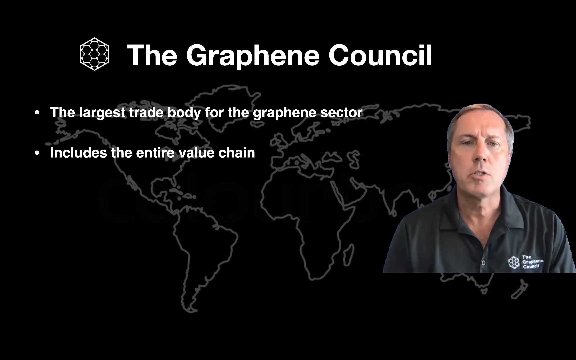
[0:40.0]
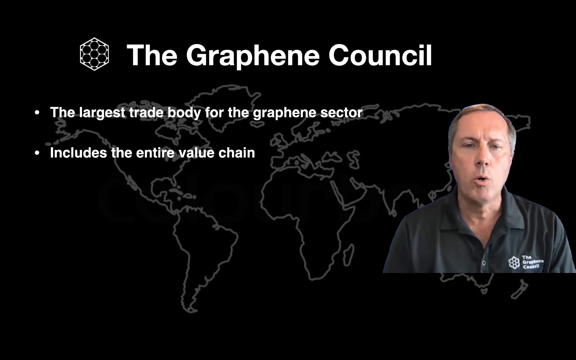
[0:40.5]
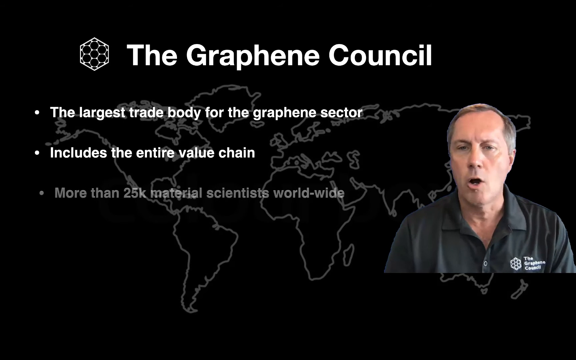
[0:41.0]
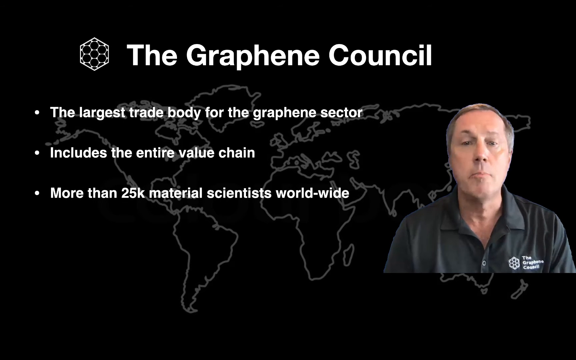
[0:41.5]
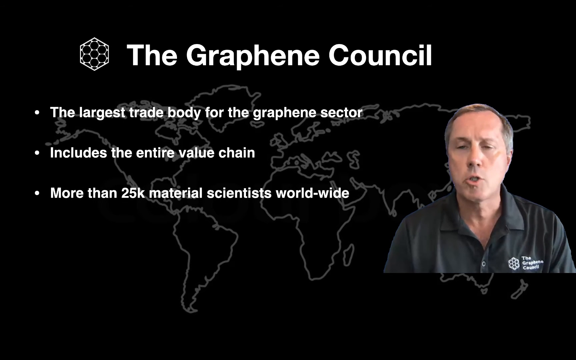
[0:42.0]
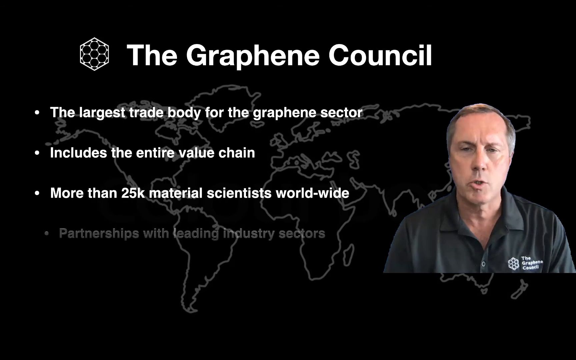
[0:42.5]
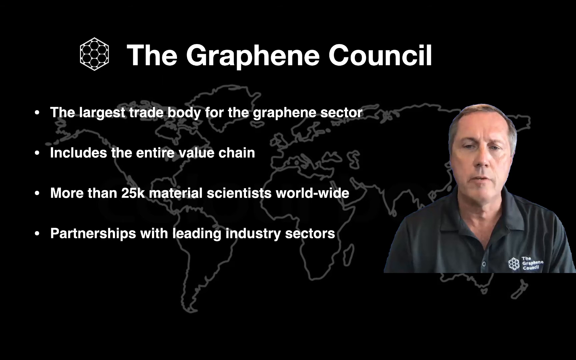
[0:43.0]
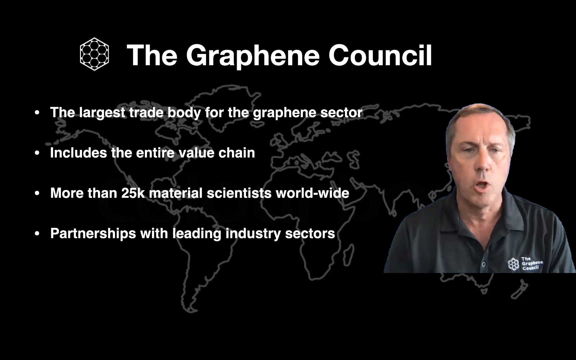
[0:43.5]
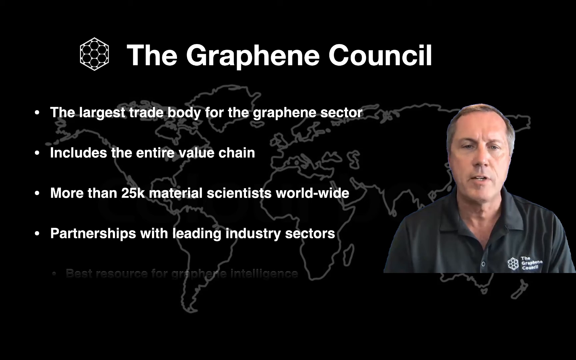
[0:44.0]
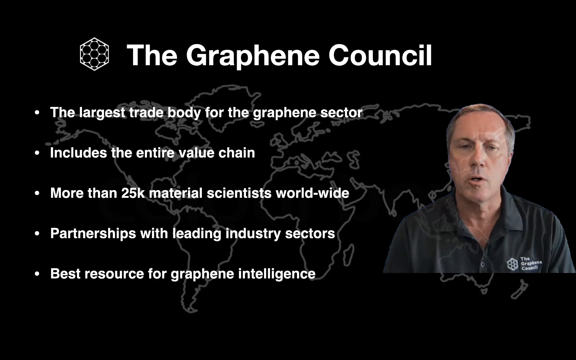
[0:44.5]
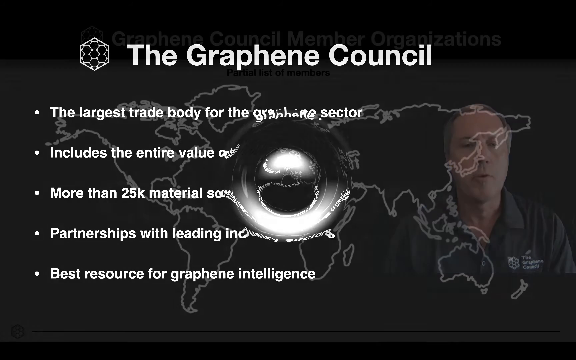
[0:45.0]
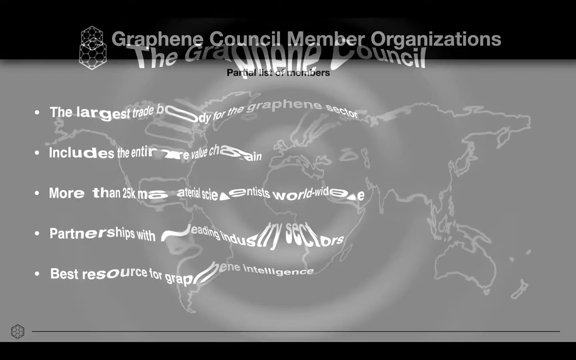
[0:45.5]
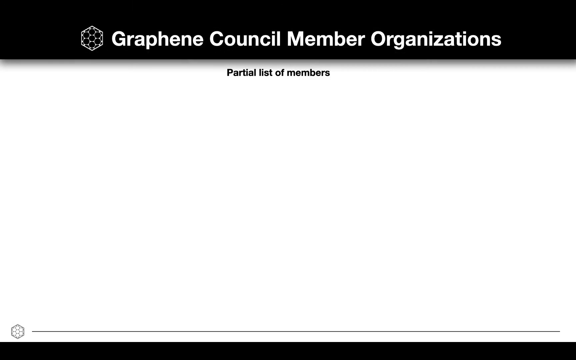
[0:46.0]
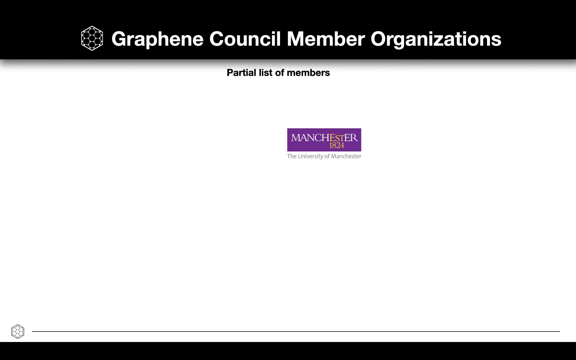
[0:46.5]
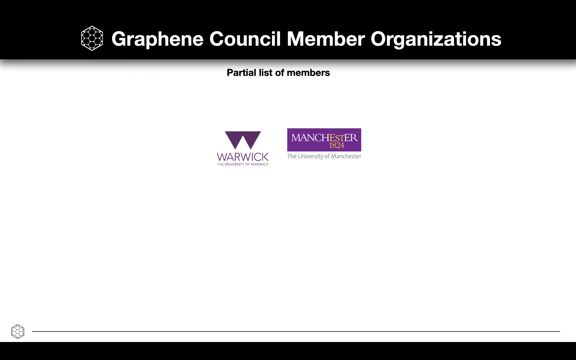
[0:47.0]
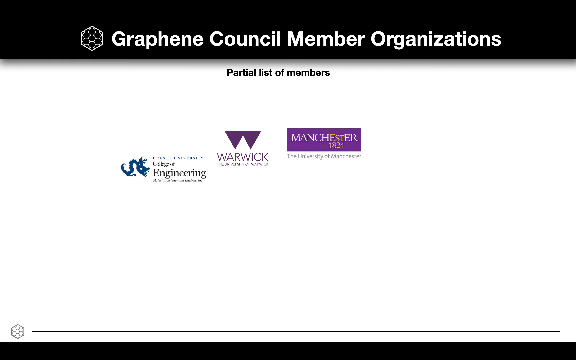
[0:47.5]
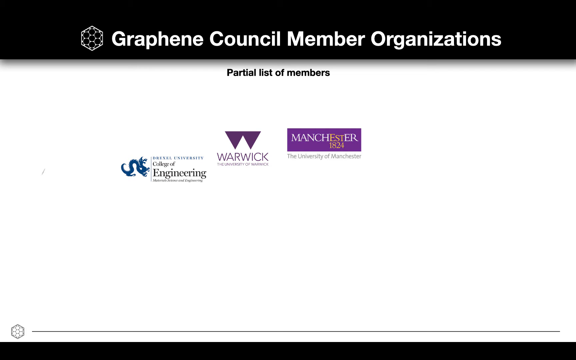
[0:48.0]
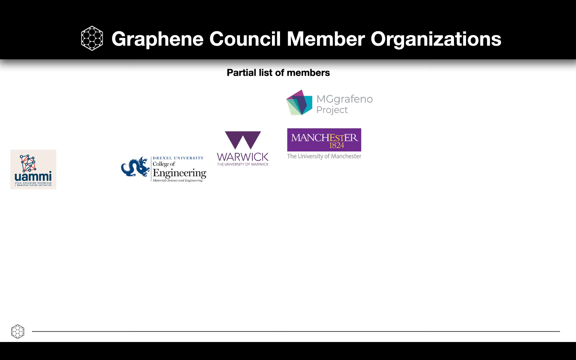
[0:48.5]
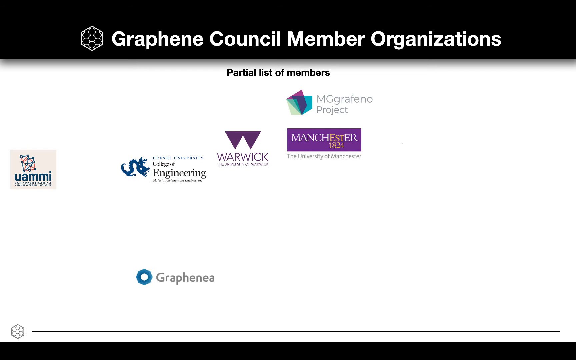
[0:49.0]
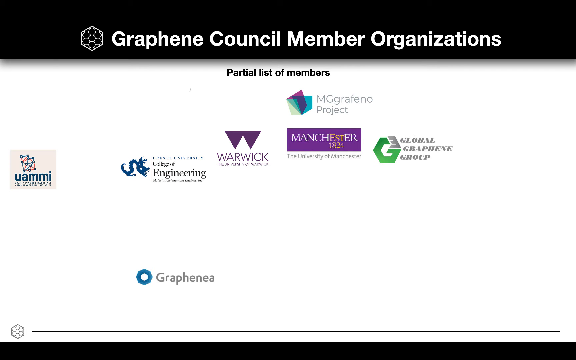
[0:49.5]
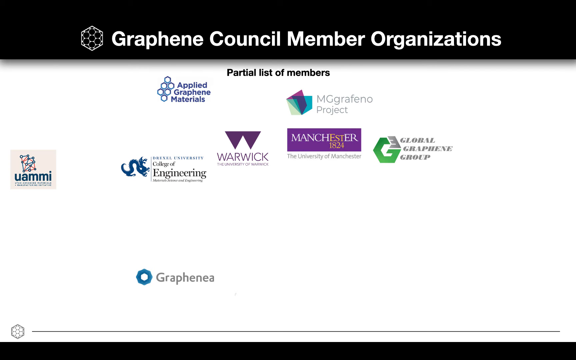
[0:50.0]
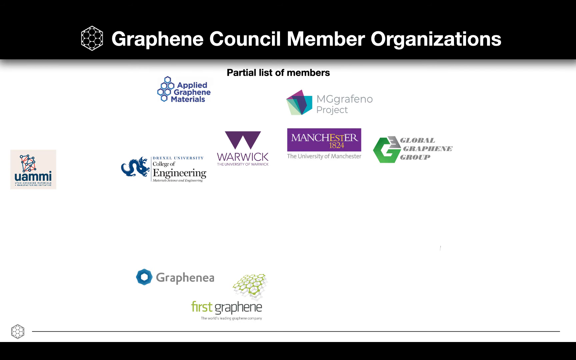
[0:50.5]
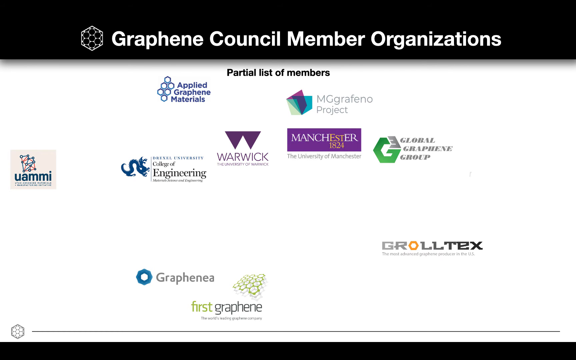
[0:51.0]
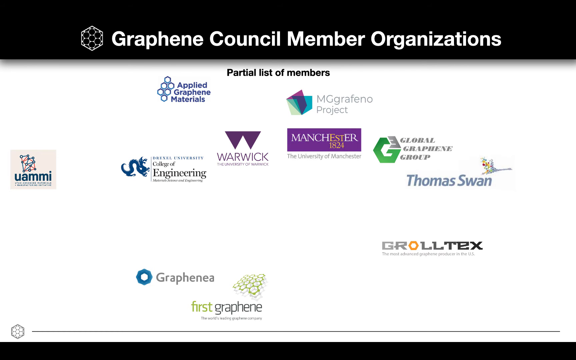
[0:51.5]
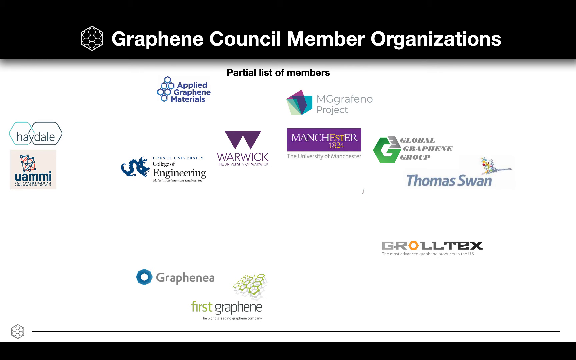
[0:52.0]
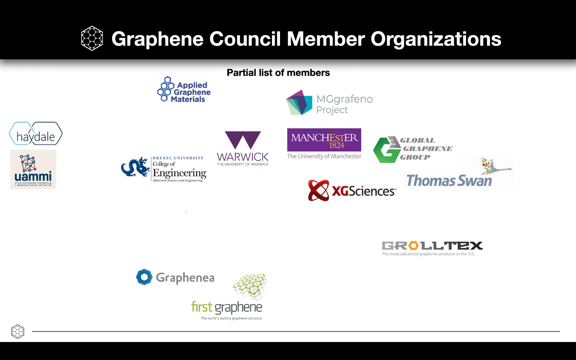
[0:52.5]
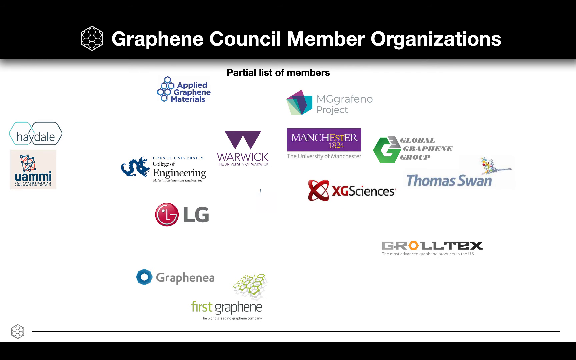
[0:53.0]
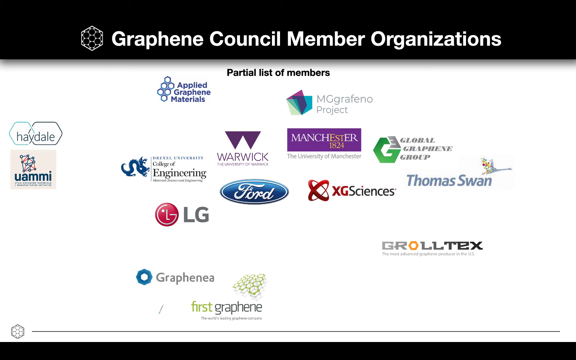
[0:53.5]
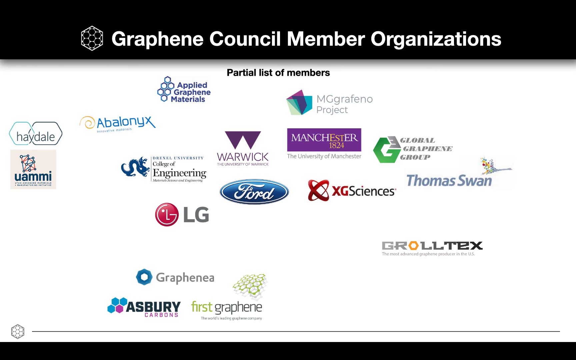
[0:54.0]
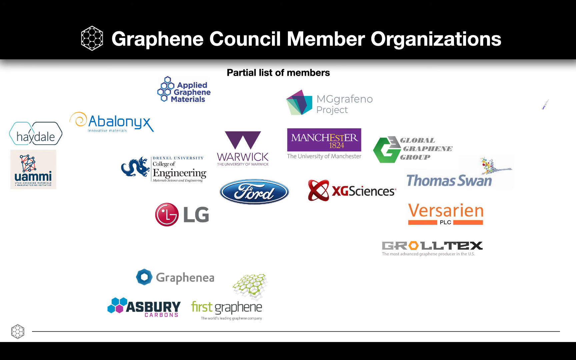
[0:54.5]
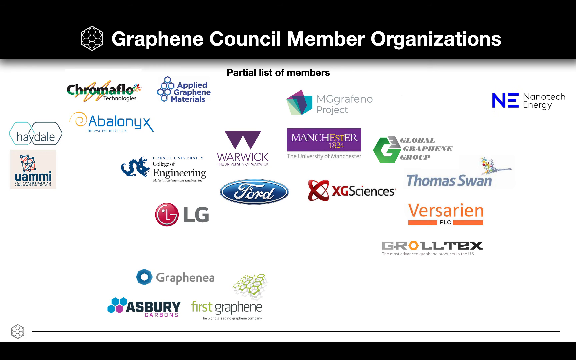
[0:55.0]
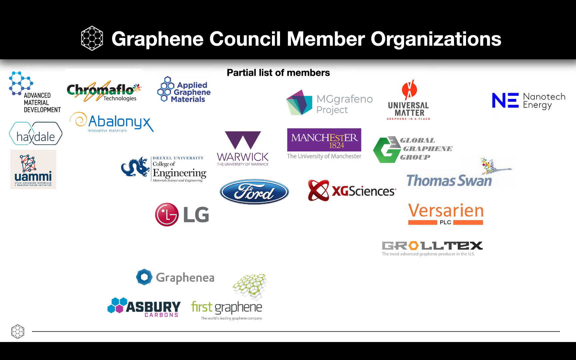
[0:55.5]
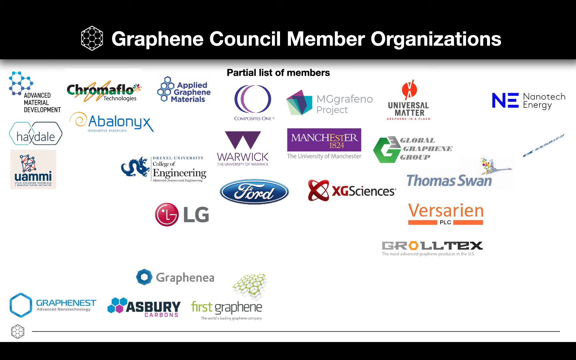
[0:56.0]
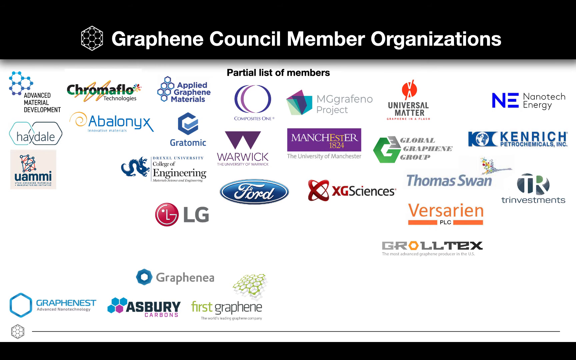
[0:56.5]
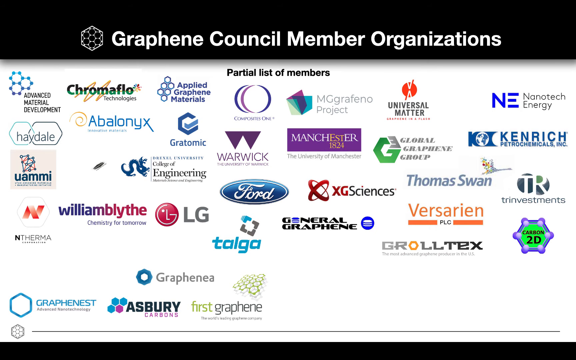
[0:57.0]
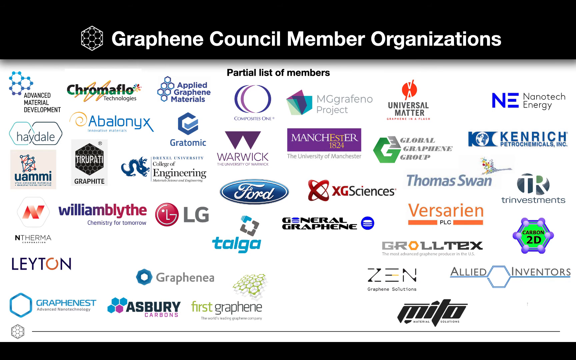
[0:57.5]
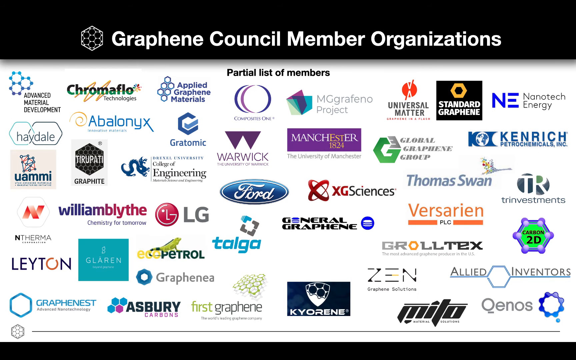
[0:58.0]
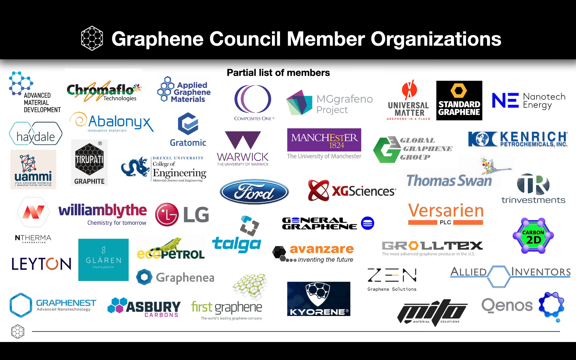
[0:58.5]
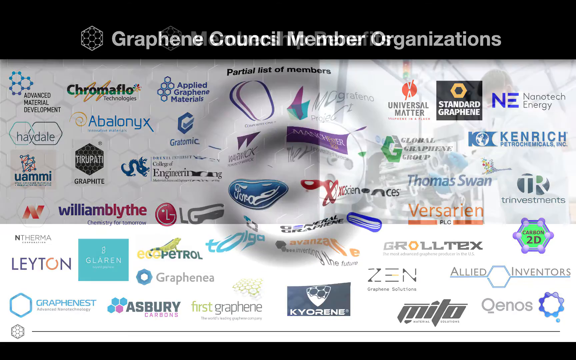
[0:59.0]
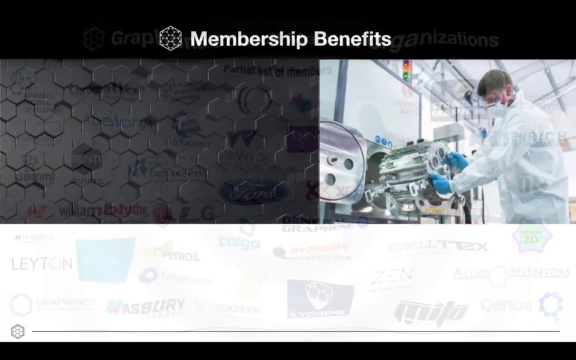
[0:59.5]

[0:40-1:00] The slide continues with text including "more than 25k," a partnership with the leading industry sectors, and "best resource for graphene intelligence." A black bar at the top carries the reverse-print text "graphene council member organizations," with "partial list of members" beneath it. Various organizations flash by, each with its logo beside it, including Warwick, the College of Engineering, Global Graphene Group, LG and Universal Matter. A puddle transition leads to two images: on the left, a mass of black honeycombs, some of them rising or sticking up; on the right, a man in a white lab coat and white mask handling some kind of machinery.